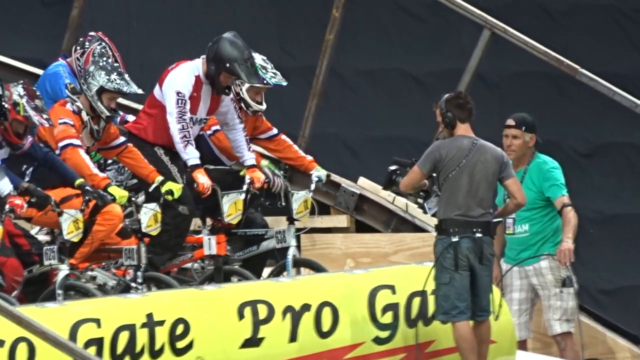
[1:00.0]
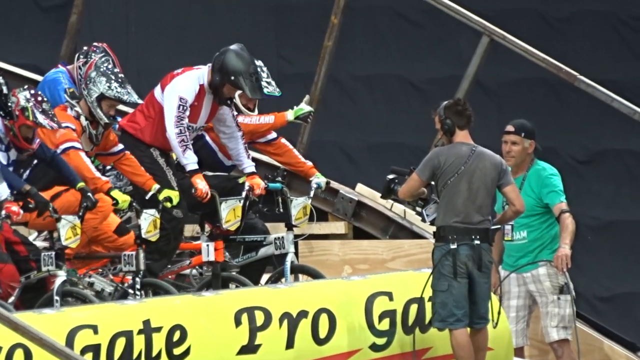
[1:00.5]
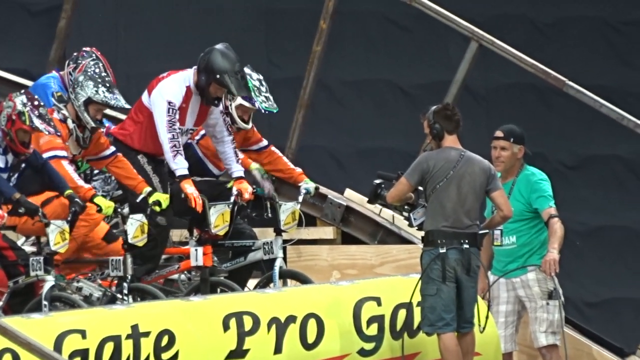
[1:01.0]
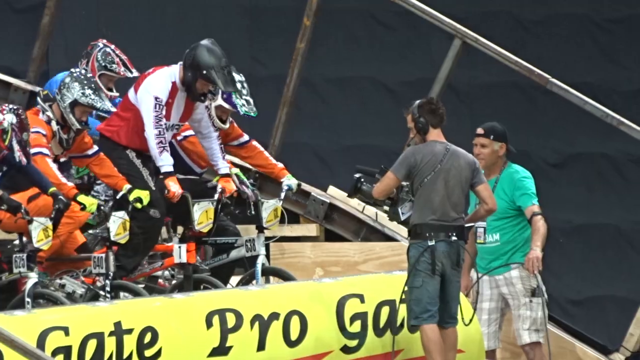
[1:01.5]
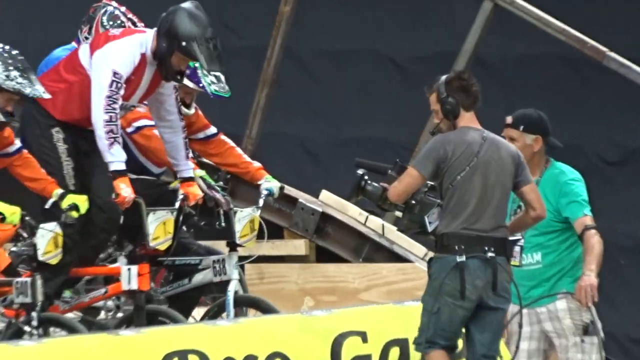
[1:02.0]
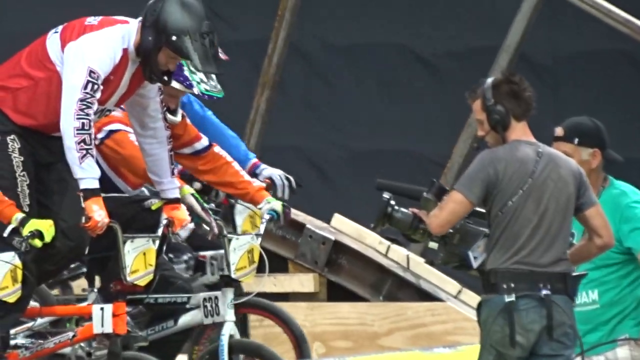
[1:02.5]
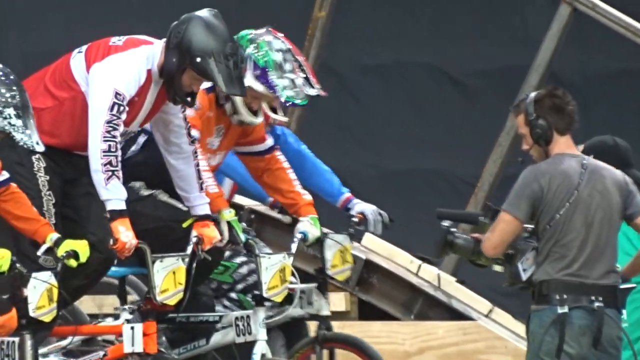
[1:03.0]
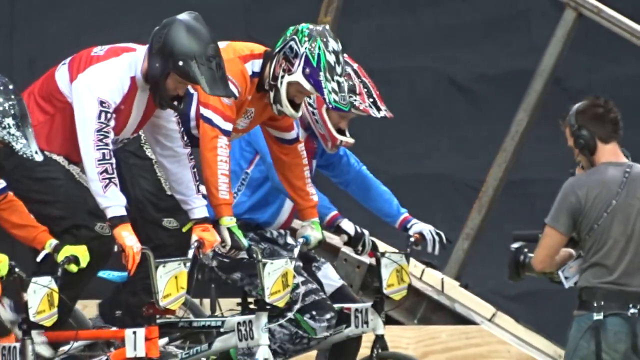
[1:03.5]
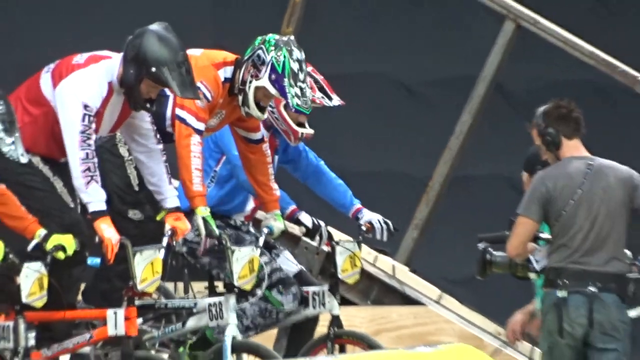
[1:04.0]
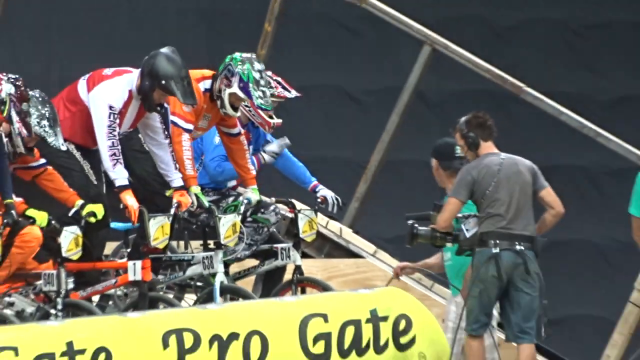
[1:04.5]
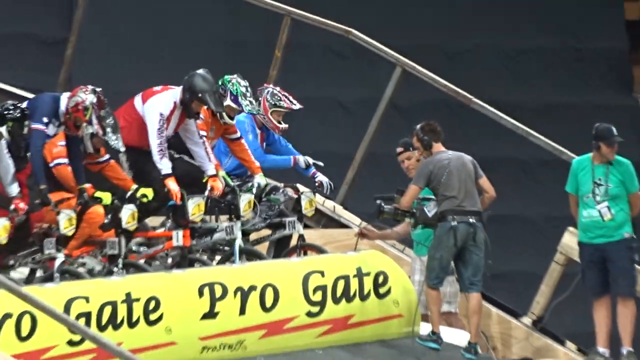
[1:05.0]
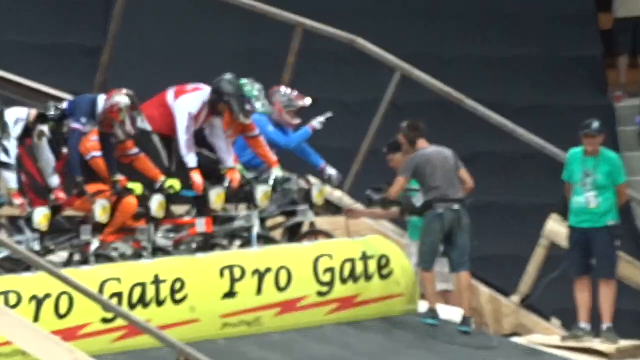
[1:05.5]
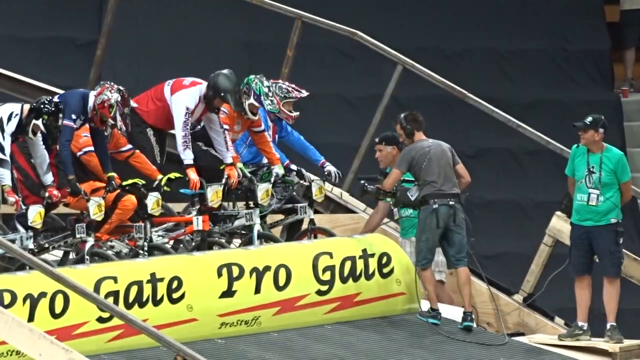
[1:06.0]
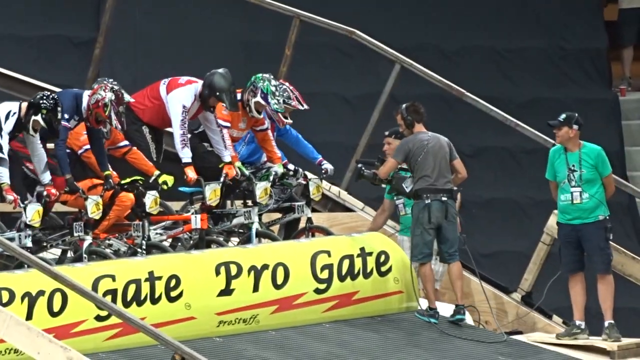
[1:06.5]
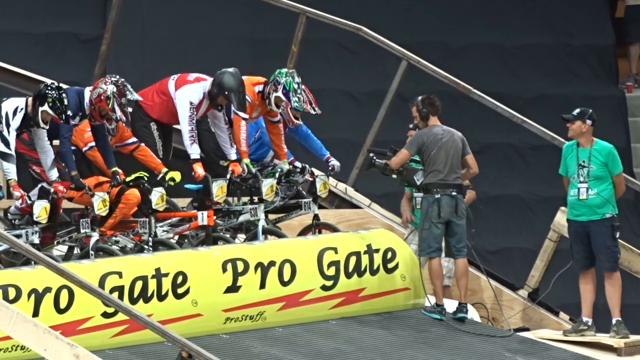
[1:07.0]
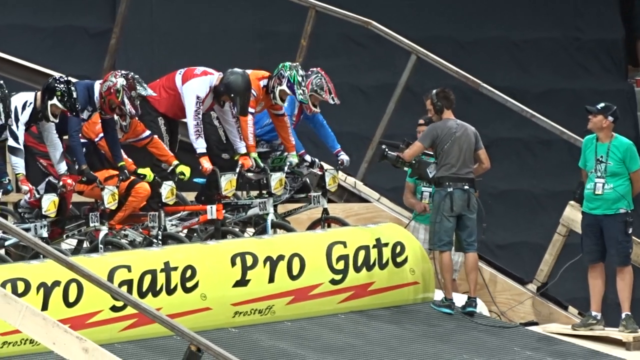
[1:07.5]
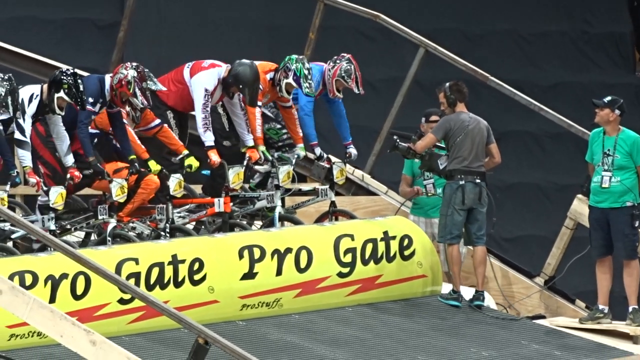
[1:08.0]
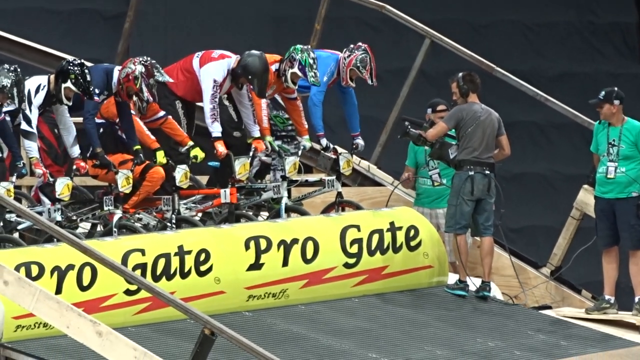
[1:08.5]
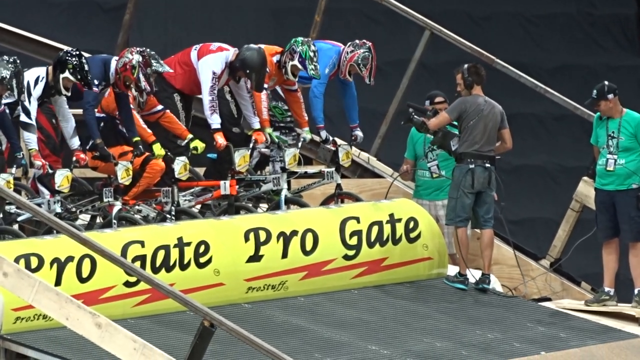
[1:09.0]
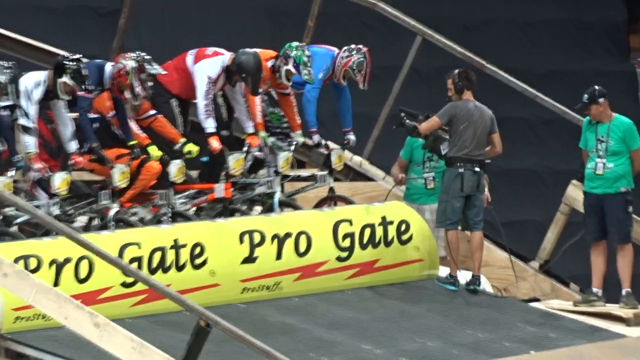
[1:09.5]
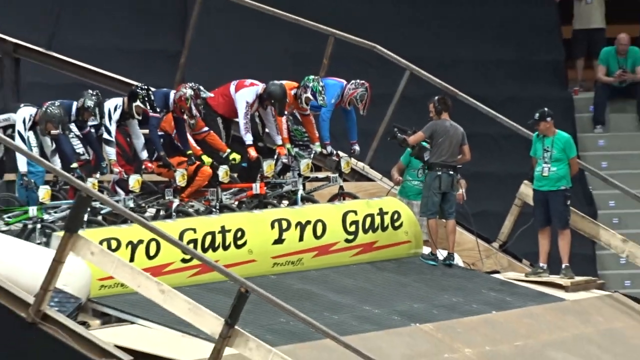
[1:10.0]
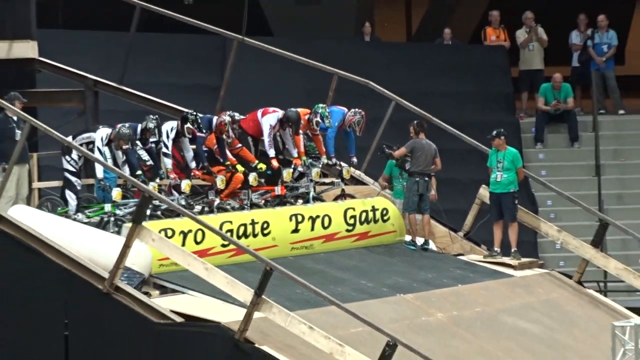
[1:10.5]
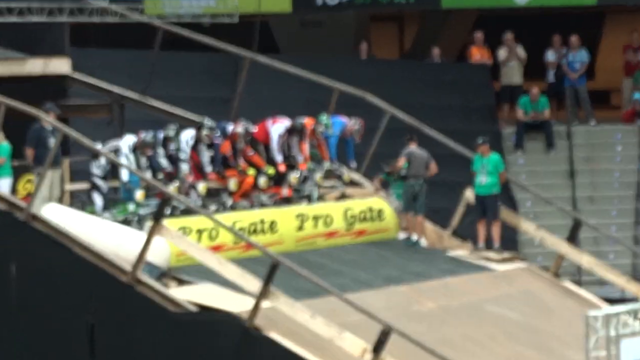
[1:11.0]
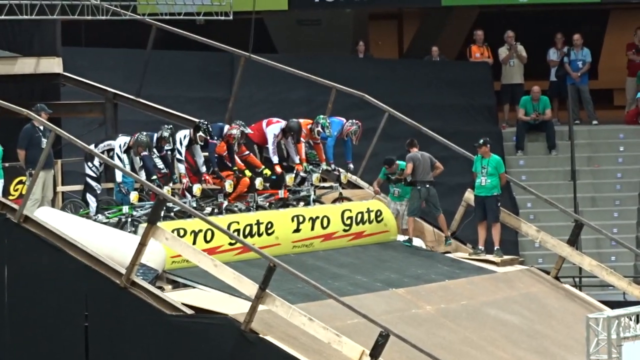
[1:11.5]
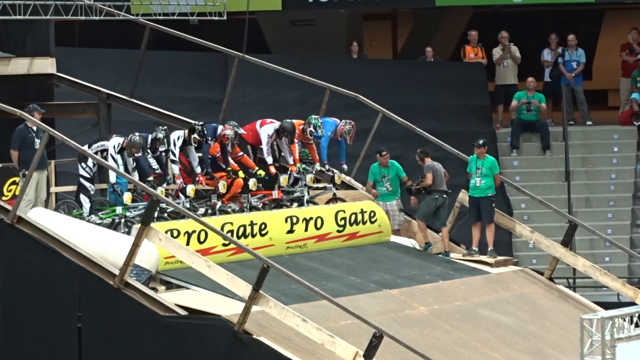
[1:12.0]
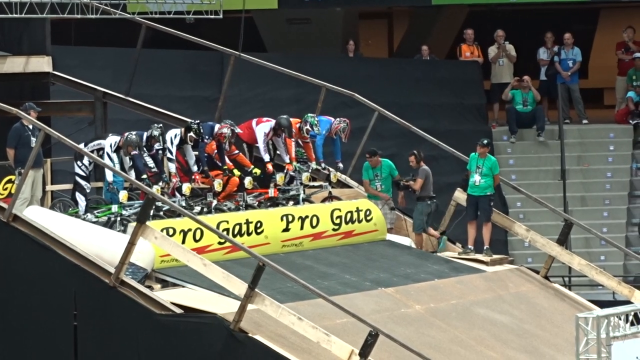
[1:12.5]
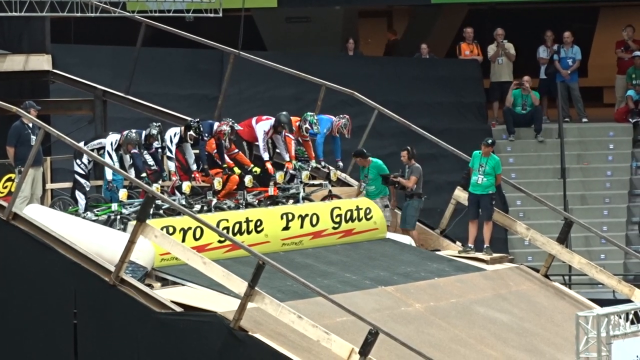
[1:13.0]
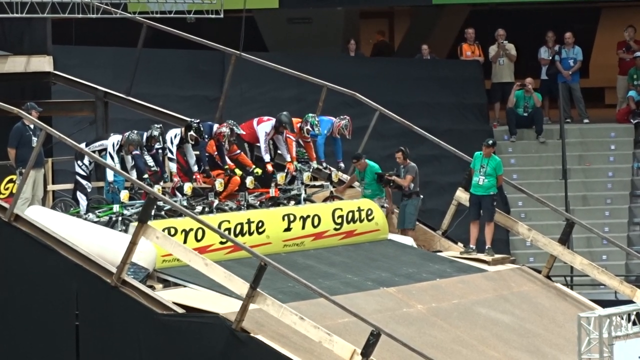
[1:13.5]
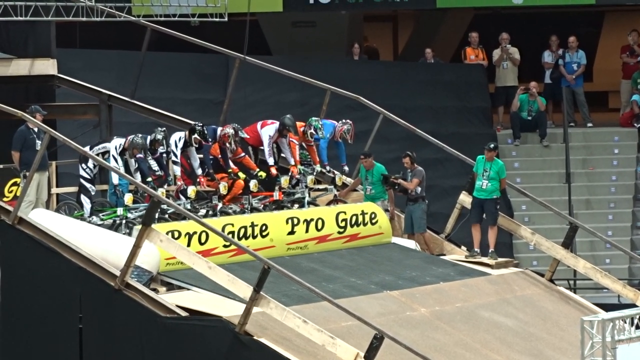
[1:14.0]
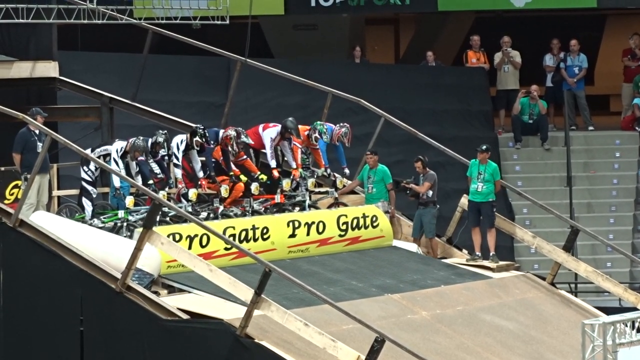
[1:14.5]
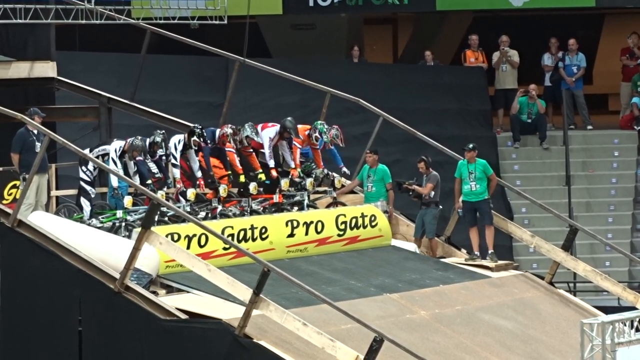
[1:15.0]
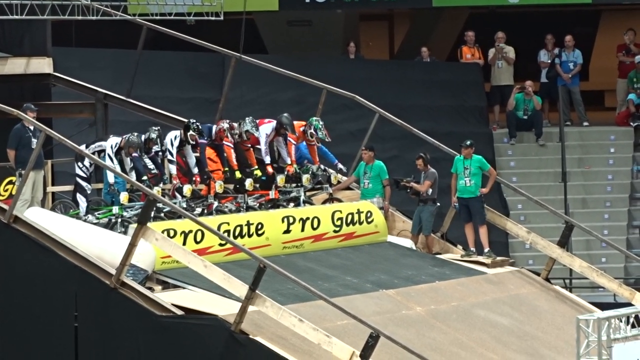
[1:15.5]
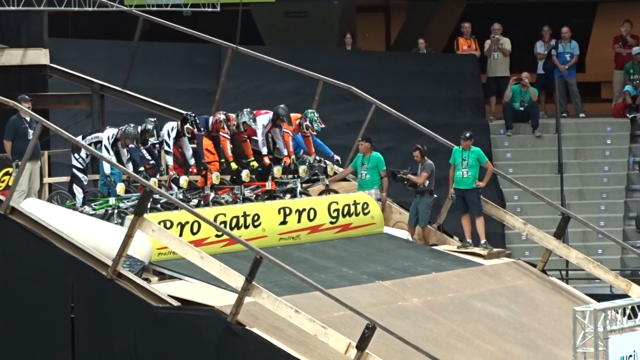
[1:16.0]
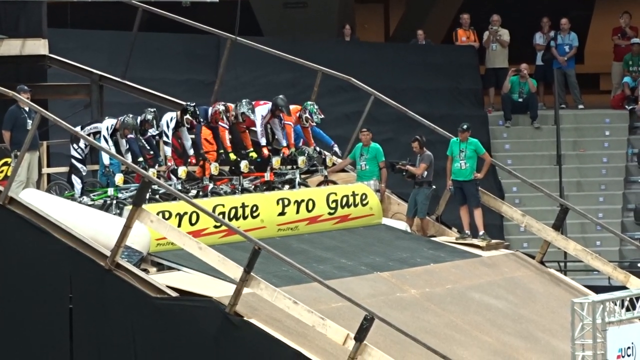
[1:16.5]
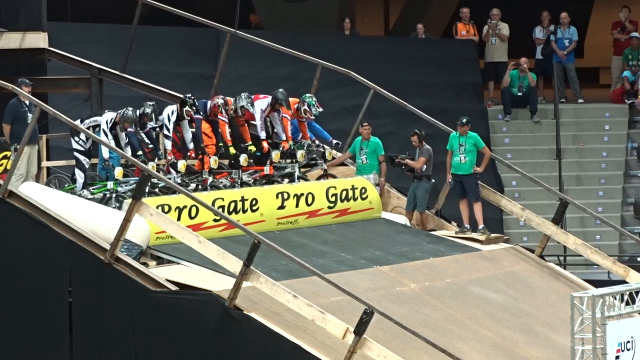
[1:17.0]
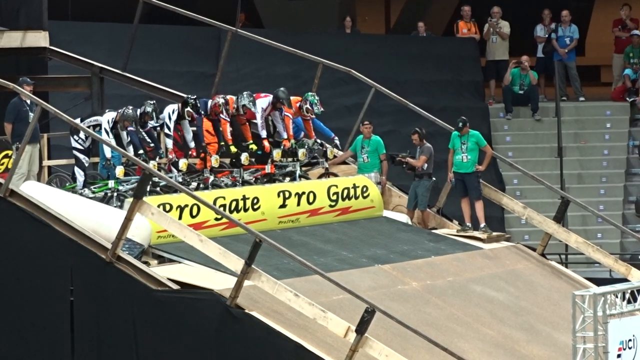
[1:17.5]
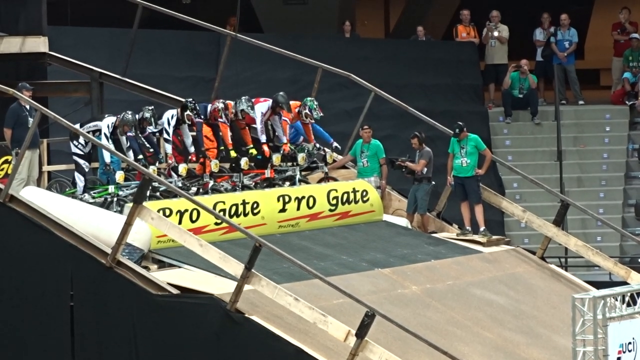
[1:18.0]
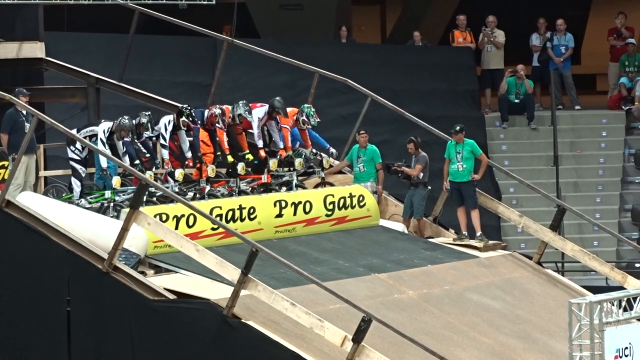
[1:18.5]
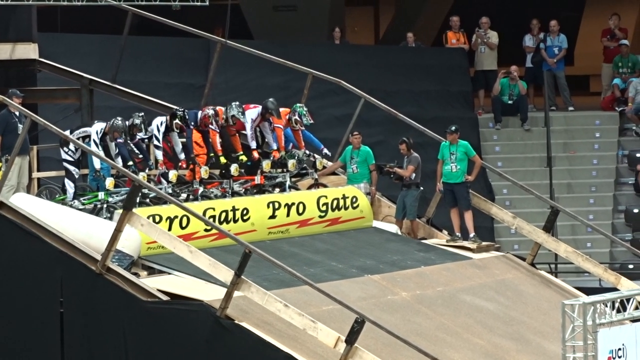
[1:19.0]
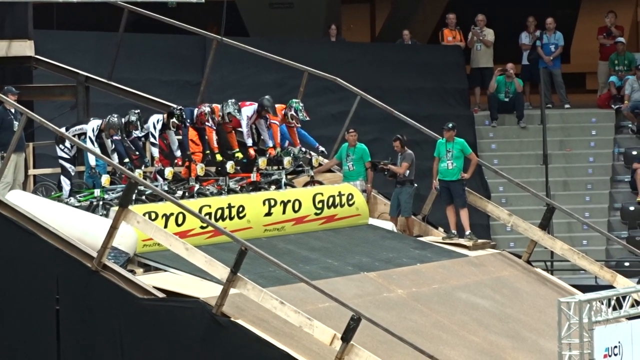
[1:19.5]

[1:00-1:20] The event is the 2014 WKBMX Rotterdam Finals, a BMX championship. It looks like the final race for these riders, and they all look determined to win. They are shown preparing to go down the track and race in circles, and they all go very fast.